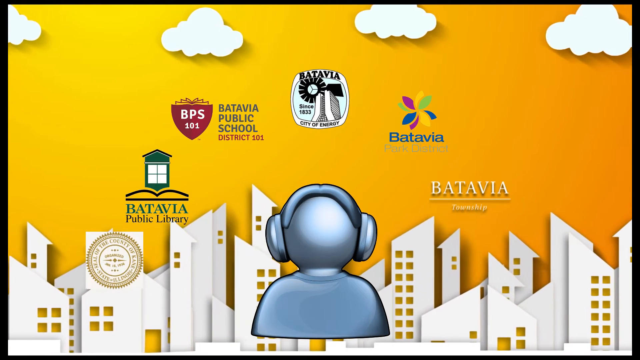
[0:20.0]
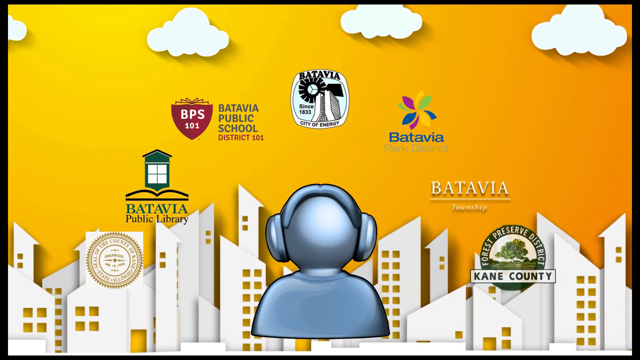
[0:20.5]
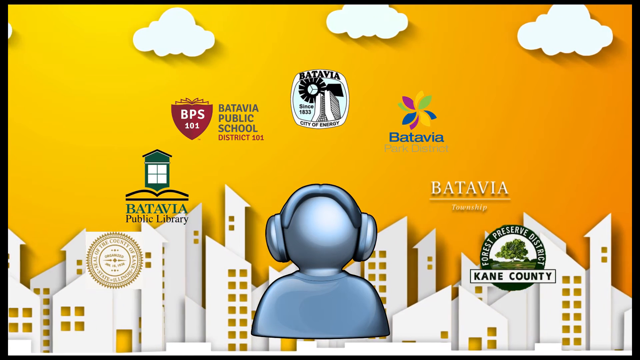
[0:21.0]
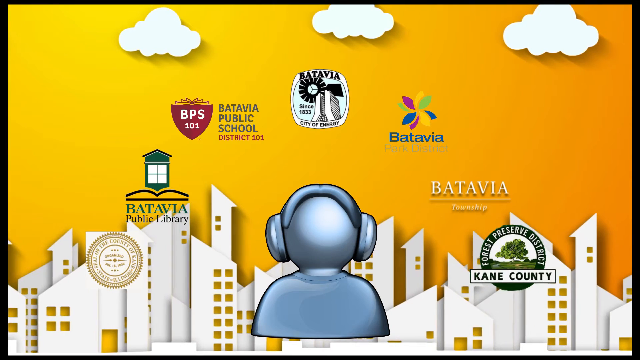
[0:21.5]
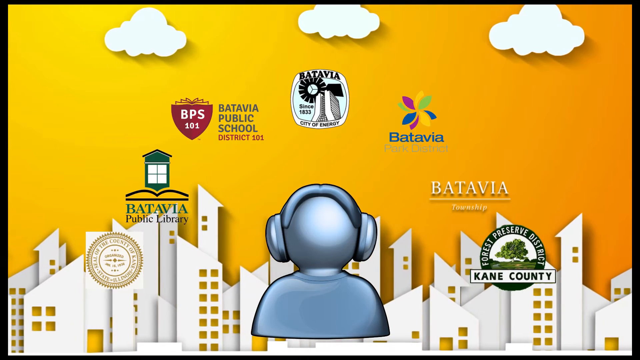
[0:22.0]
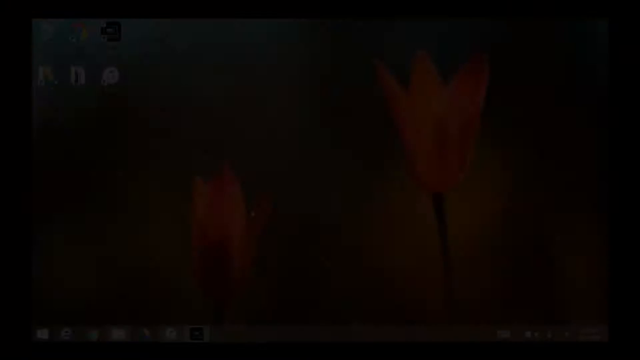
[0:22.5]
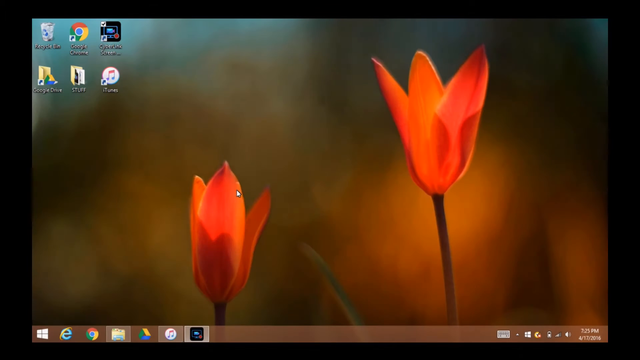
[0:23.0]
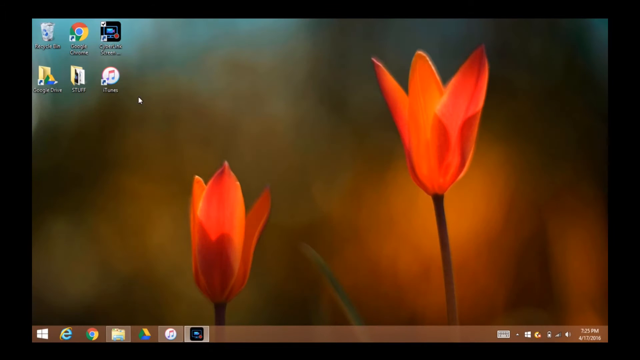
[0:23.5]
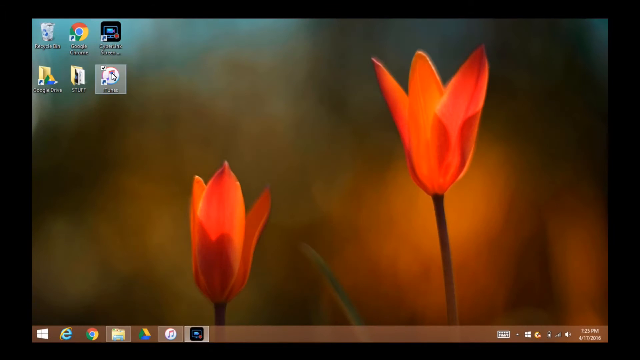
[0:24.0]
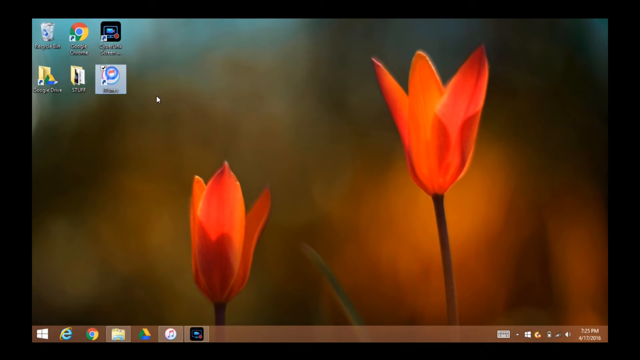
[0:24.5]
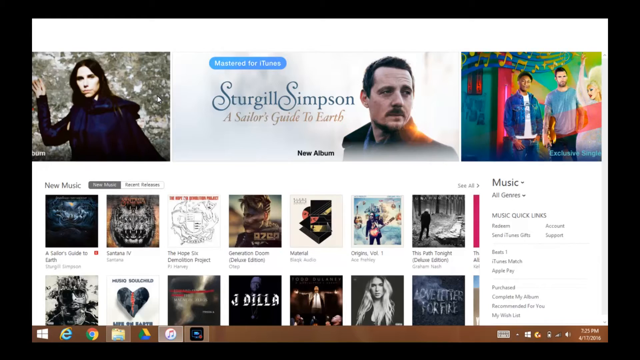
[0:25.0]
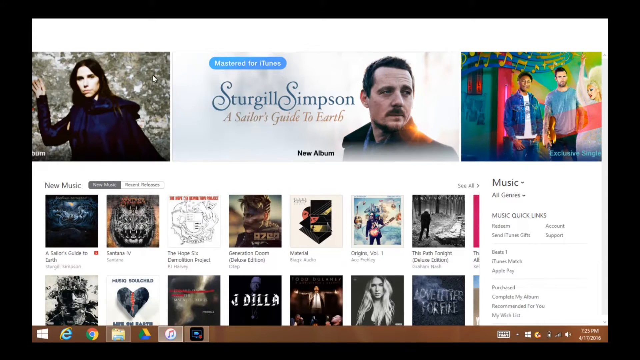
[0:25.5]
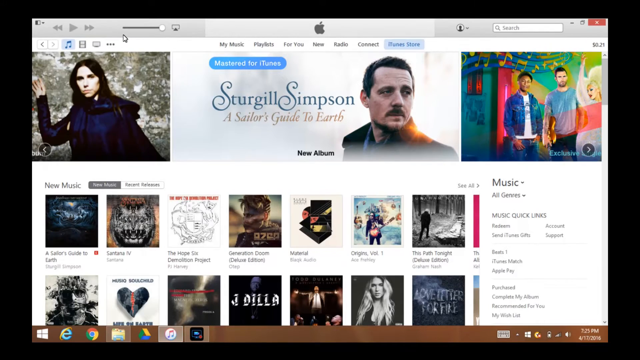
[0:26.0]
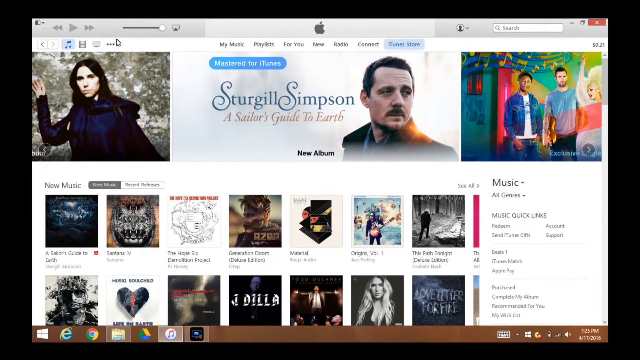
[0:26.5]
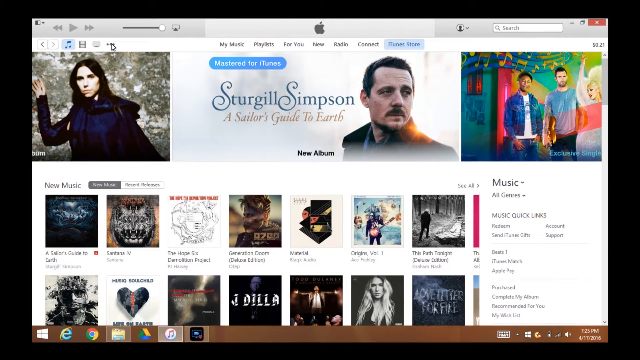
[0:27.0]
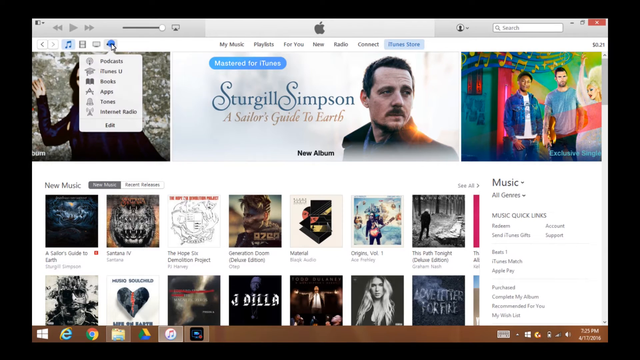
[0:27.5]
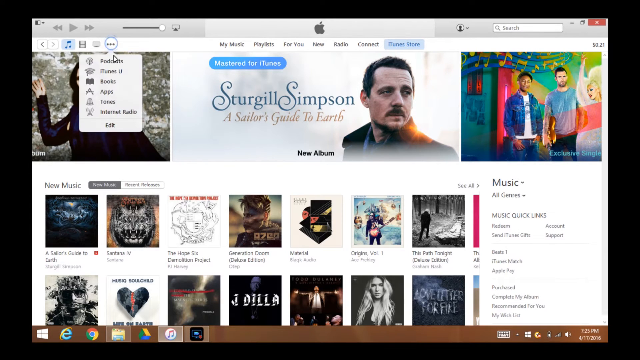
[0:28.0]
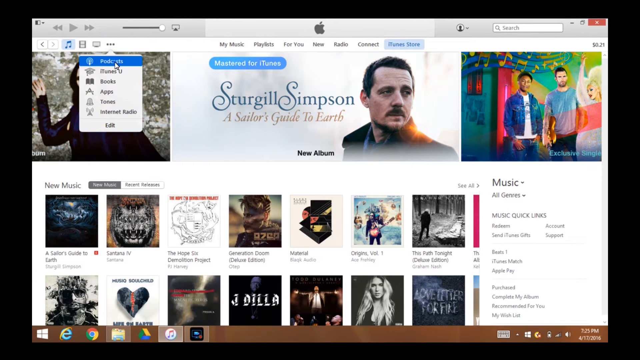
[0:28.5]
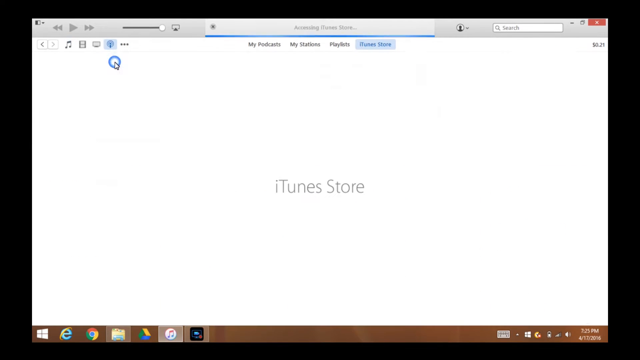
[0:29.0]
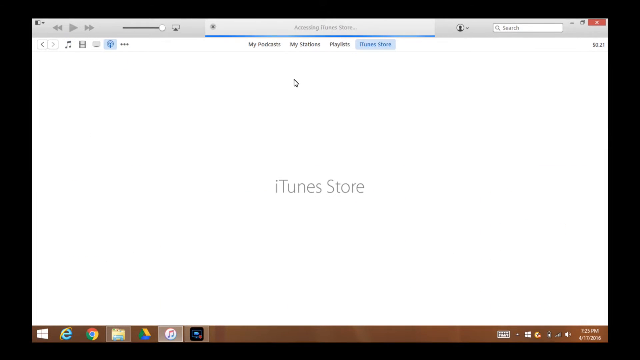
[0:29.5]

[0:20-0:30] A laptop appears, and someone is clicking on it. The Potavia logo is visible, reading "Potavia Public School District 101", along with a drawing of what seems to be the school premises and drawings of clouds. The laptop shows a screenshot of a flower, and there are movies on it. Words written on the laptop apparently include "Stardew Simpsons, A Sailor's Heart". A robot is visible. A logo for Potavia Public Library appears, followed by Potavia Park Street and then Potavia Town.